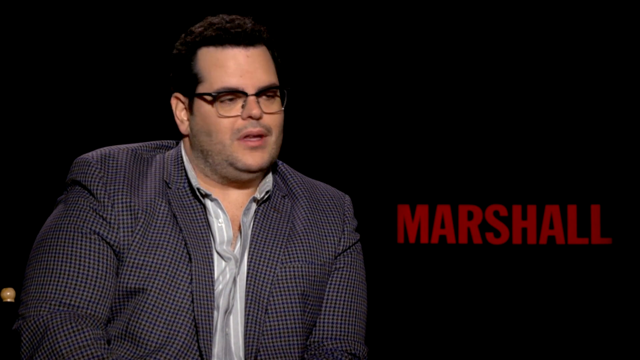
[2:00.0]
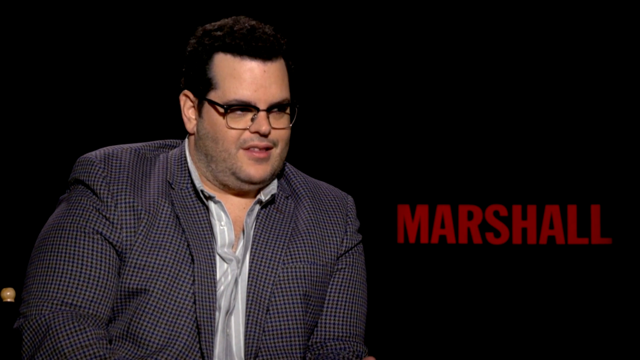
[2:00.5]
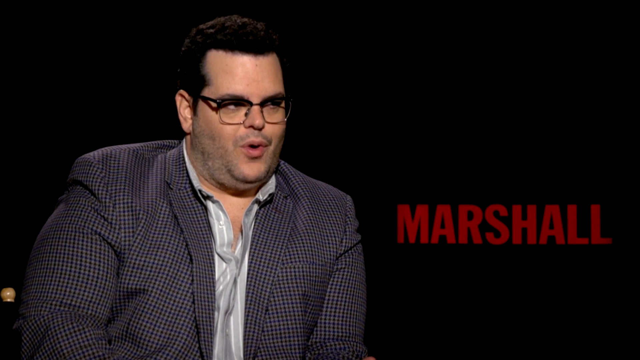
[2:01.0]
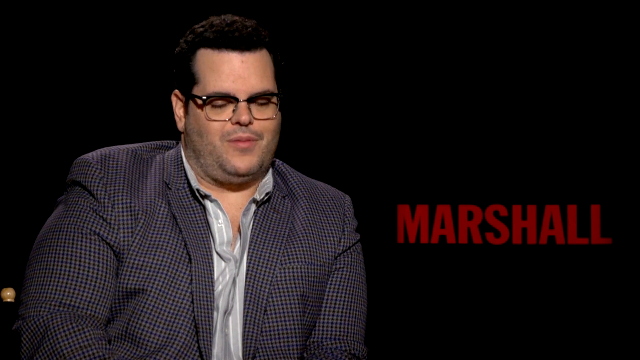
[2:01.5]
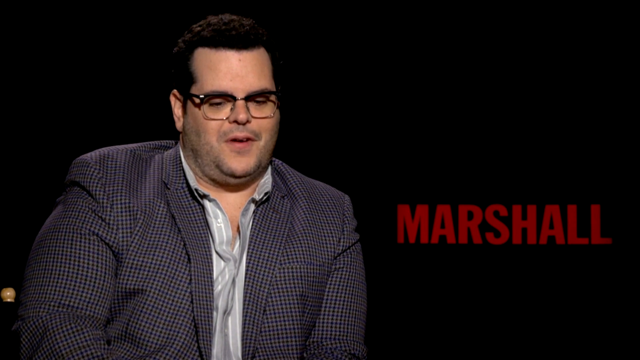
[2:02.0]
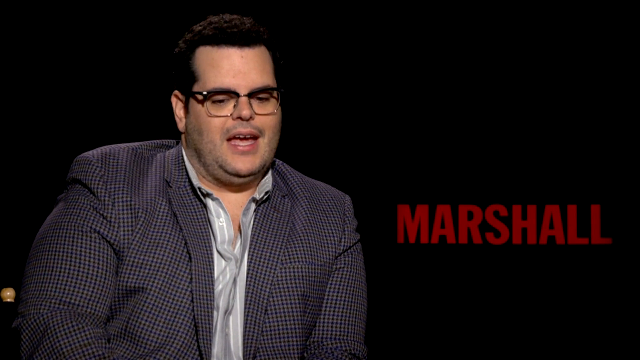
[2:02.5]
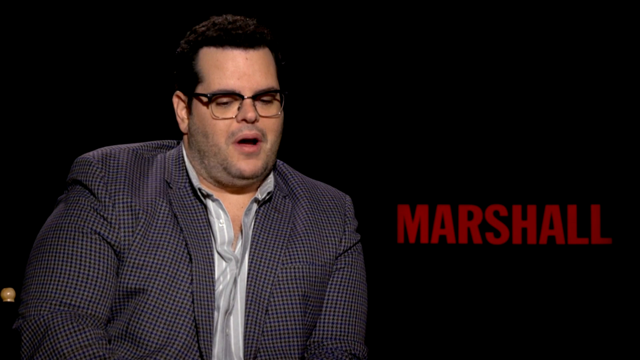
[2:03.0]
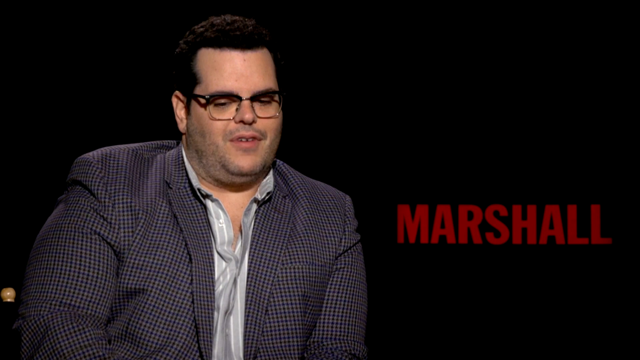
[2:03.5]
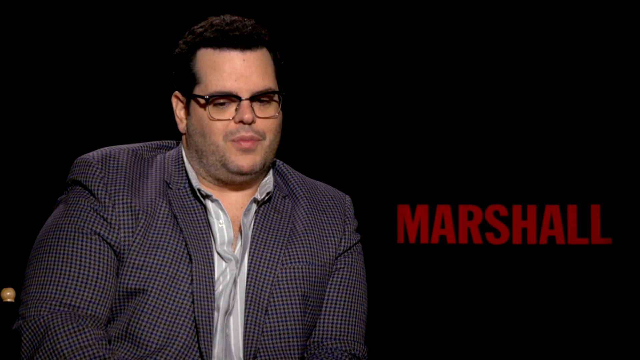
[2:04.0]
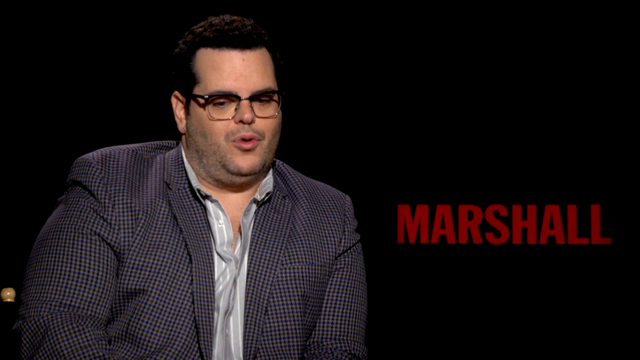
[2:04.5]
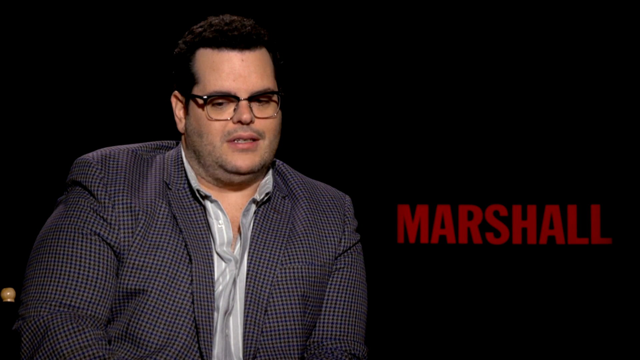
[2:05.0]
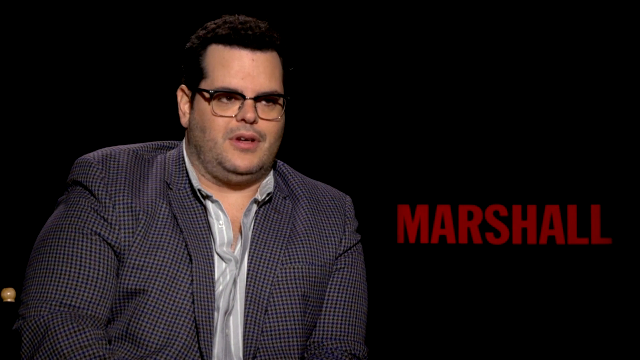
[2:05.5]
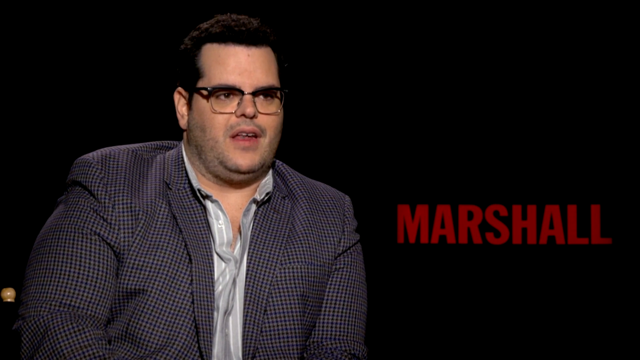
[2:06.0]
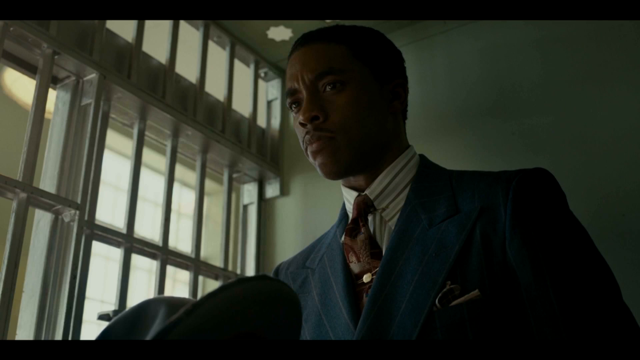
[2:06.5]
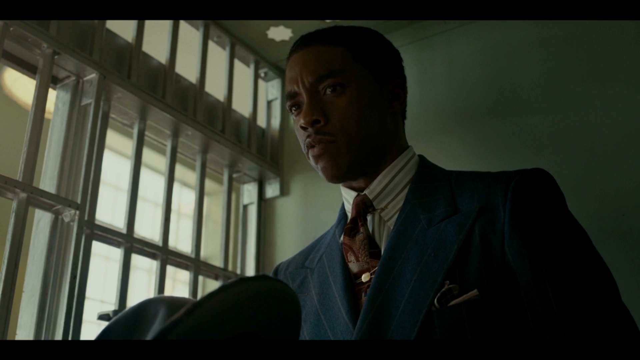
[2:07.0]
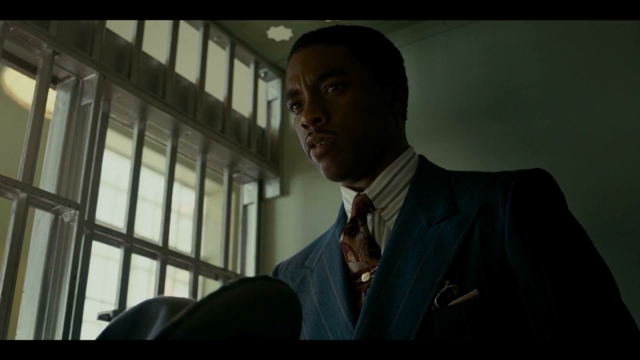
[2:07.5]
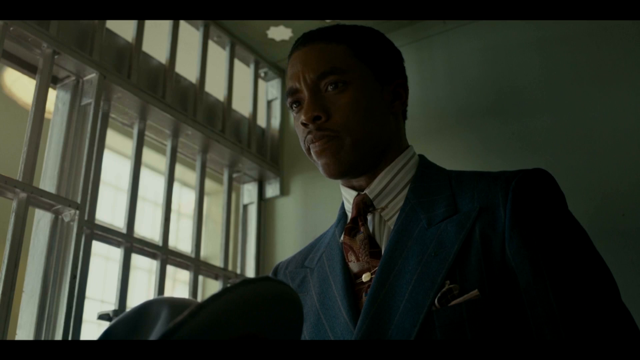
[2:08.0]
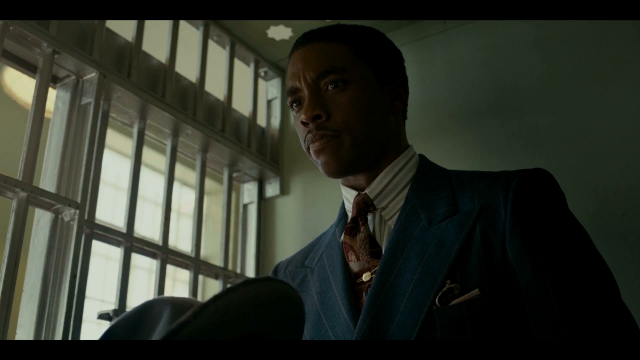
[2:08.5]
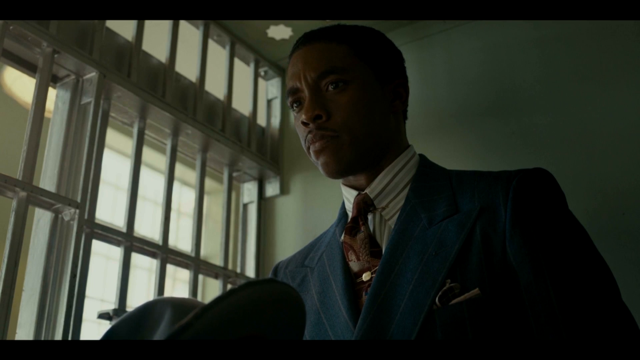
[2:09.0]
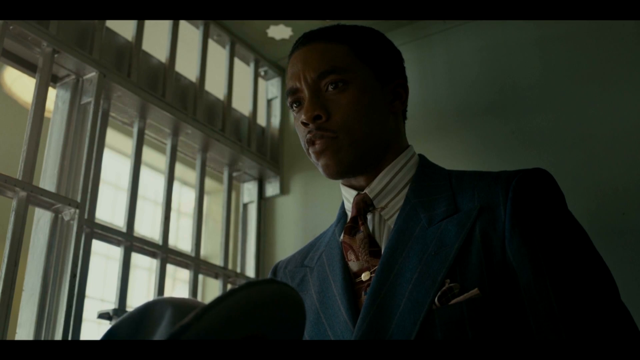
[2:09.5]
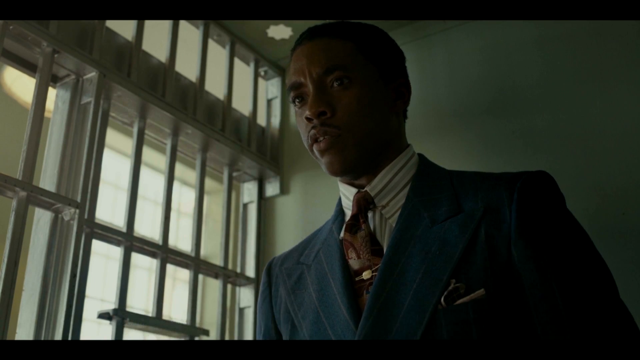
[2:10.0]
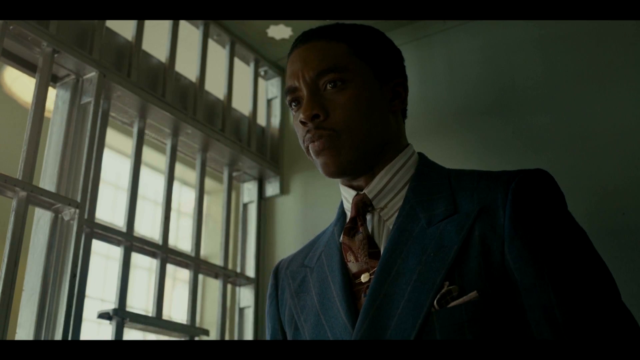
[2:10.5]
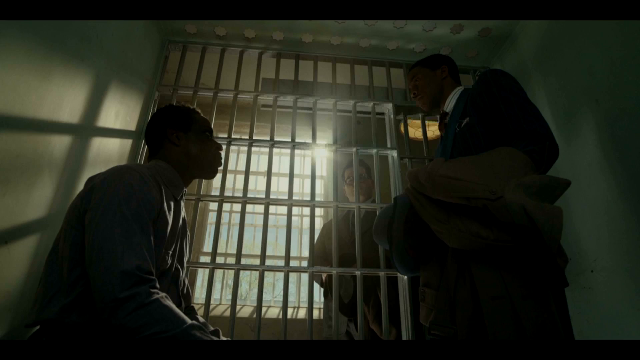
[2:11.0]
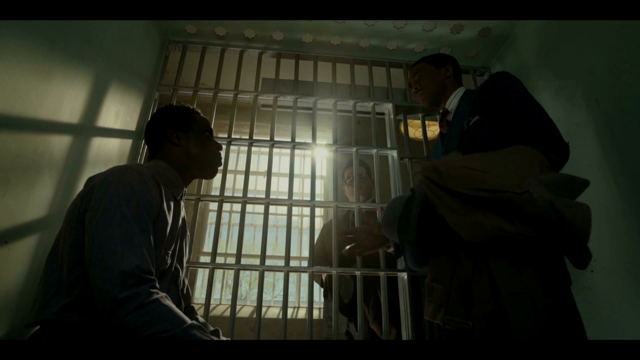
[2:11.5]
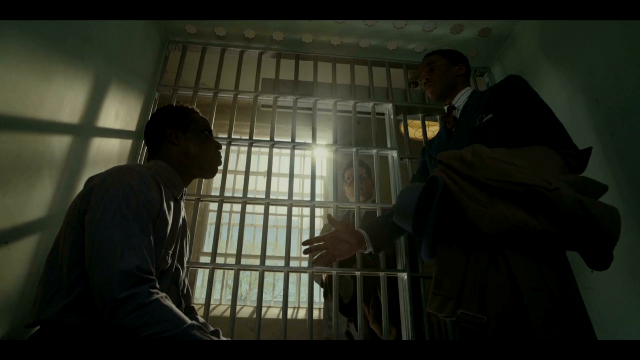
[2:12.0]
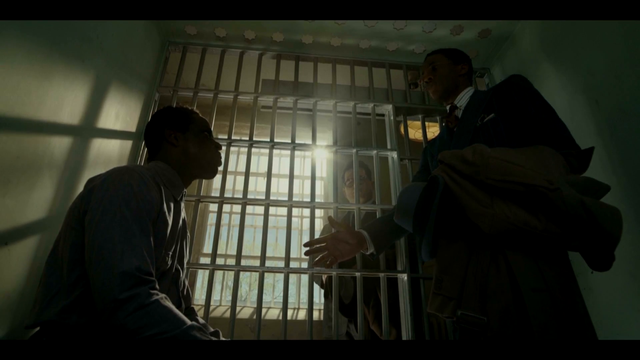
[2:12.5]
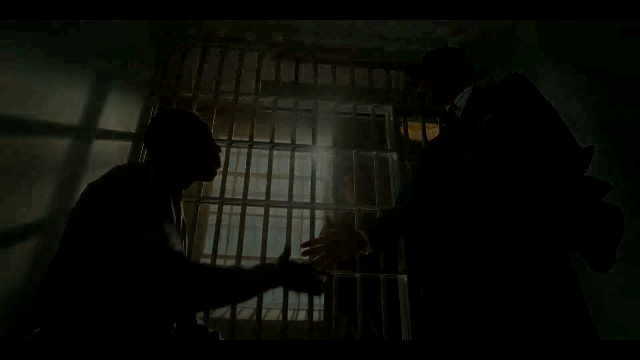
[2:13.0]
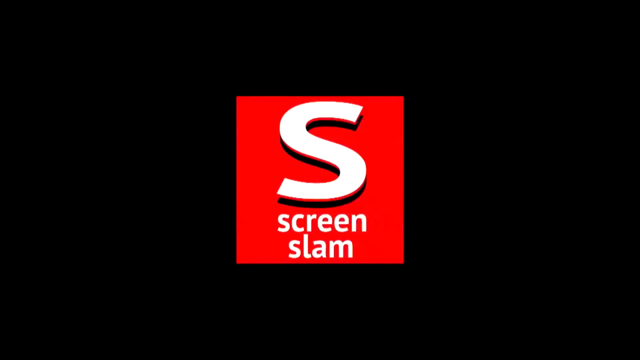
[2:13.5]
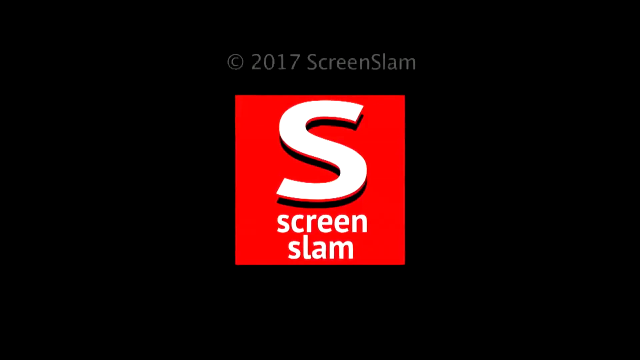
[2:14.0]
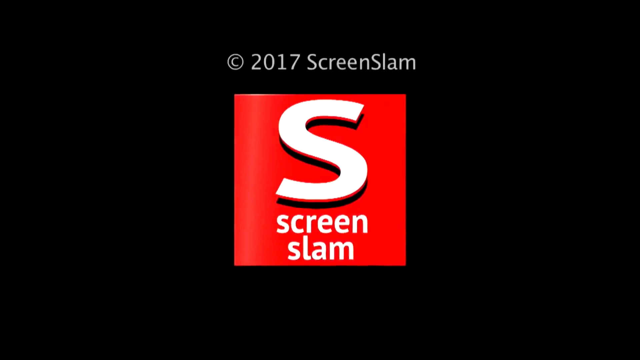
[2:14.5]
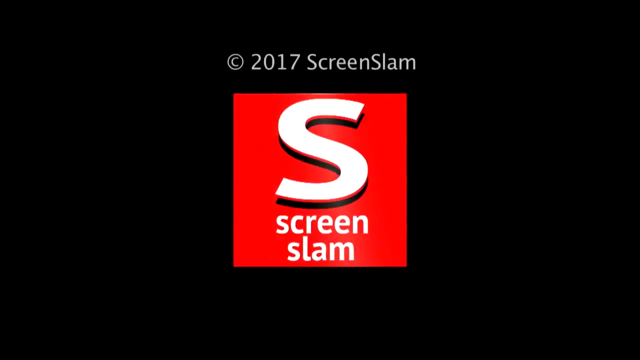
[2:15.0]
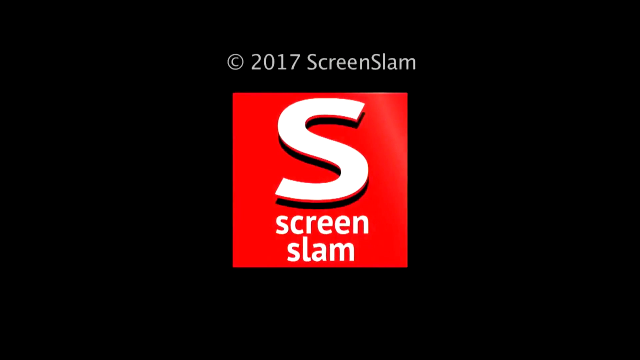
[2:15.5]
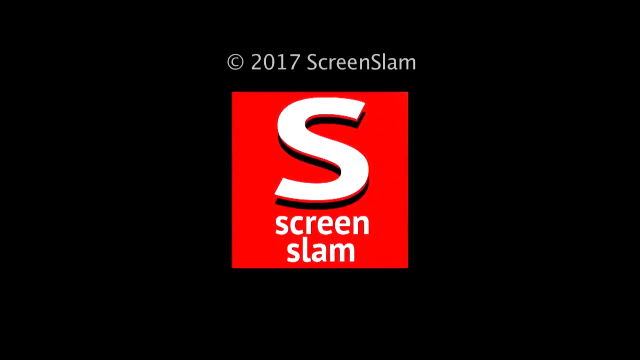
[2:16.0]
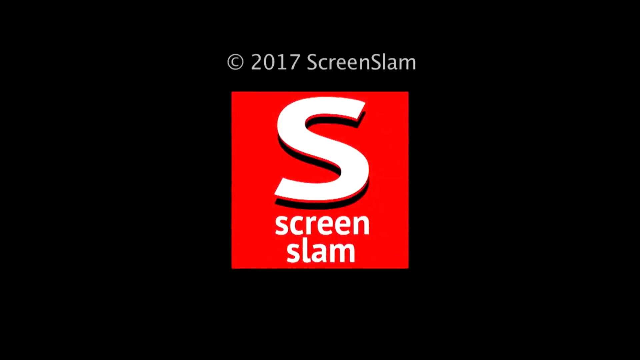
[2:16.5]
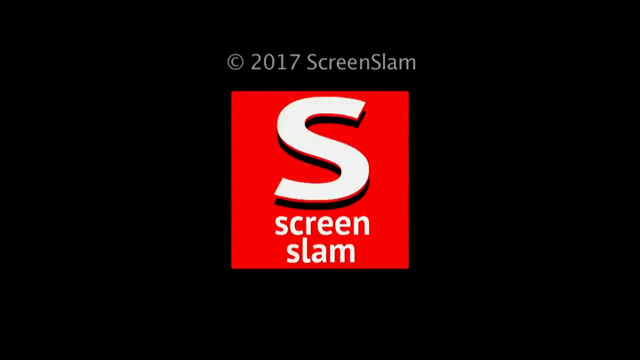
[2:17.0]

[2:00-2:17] The same man continues talking, looking down a lot as he speaks. Then what looks like the lawyer character shakes hands with another character seen earlier; he appears to be at court with his case. At the end, the video cuts to an end screen with an S on the top half of the screen and "Screen Slam" on the bottom half, and at the very top it reads "Copyright 2017 Screen Slam".